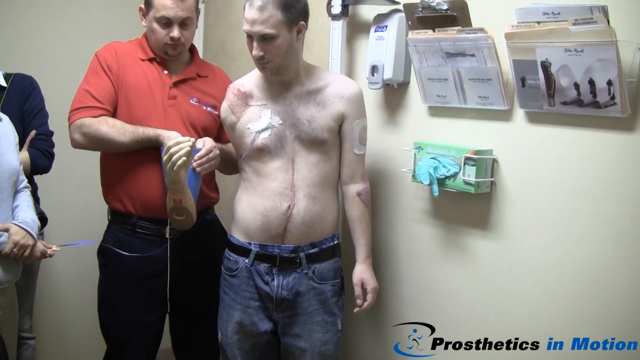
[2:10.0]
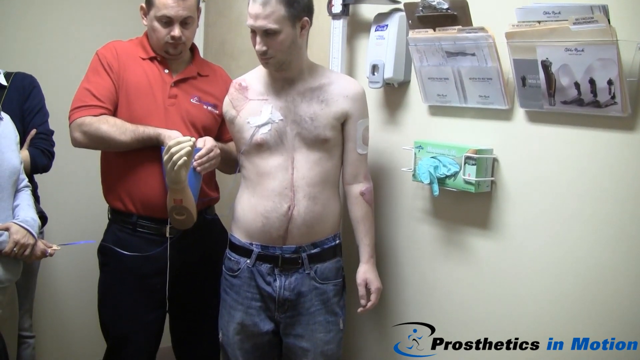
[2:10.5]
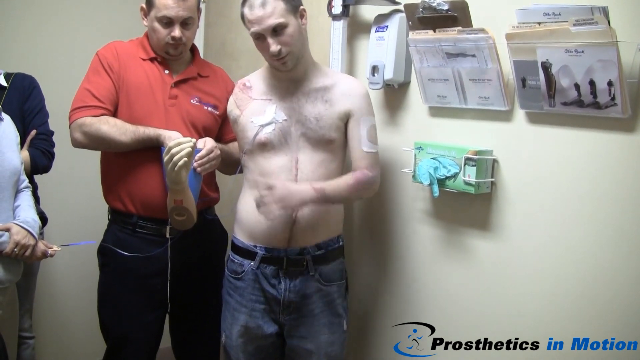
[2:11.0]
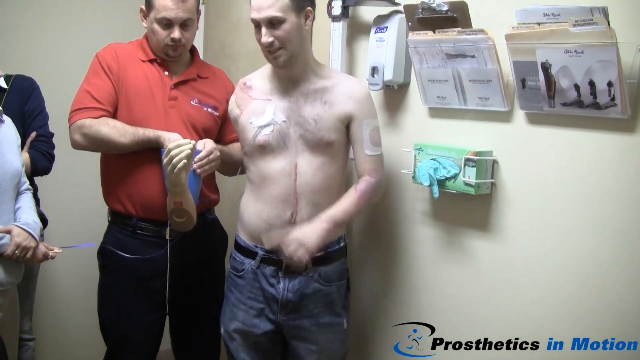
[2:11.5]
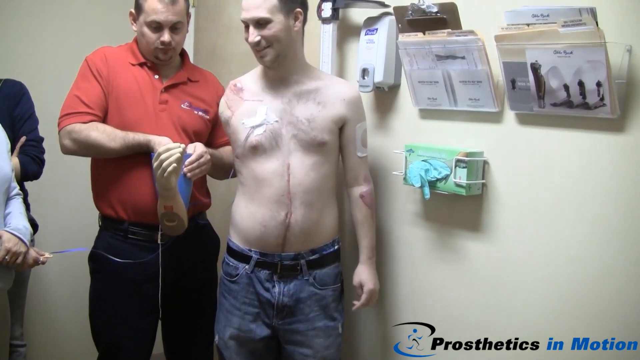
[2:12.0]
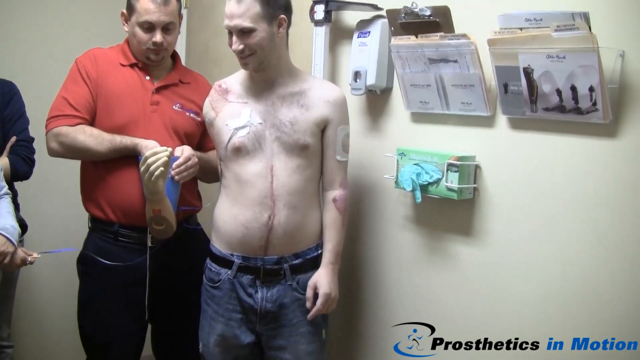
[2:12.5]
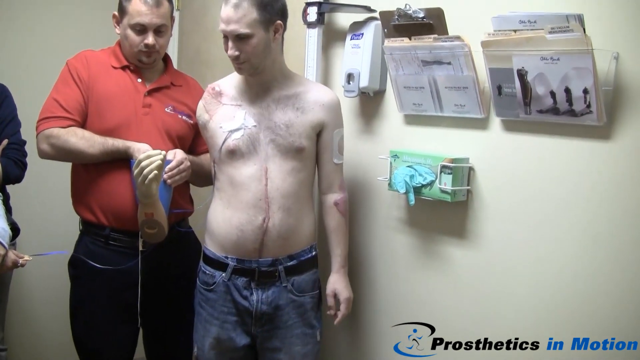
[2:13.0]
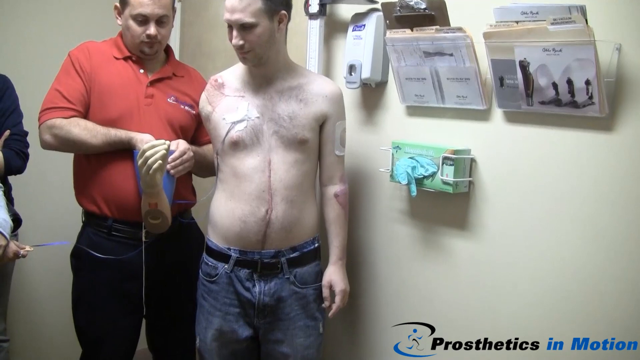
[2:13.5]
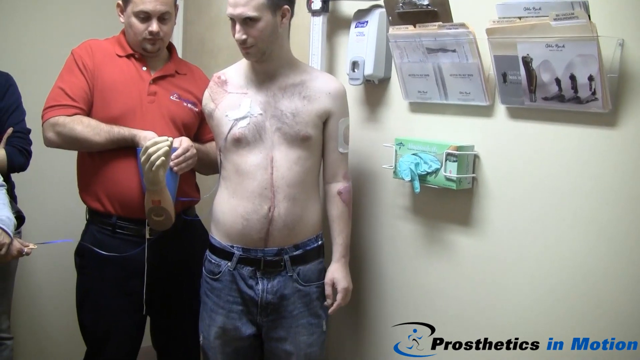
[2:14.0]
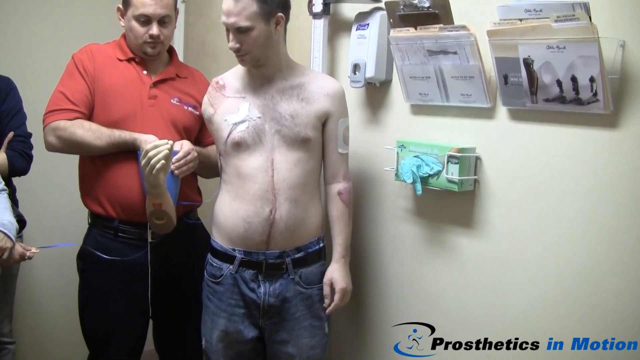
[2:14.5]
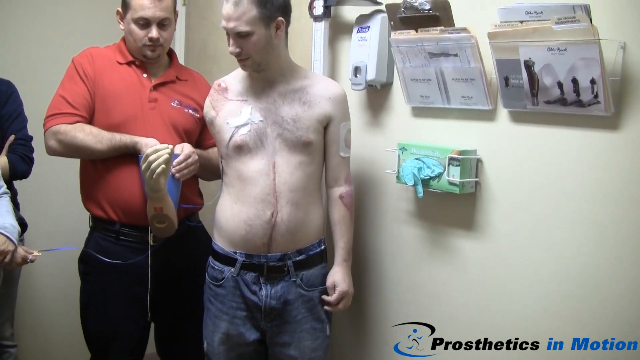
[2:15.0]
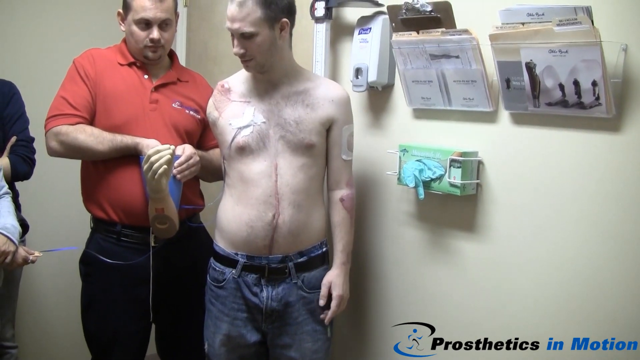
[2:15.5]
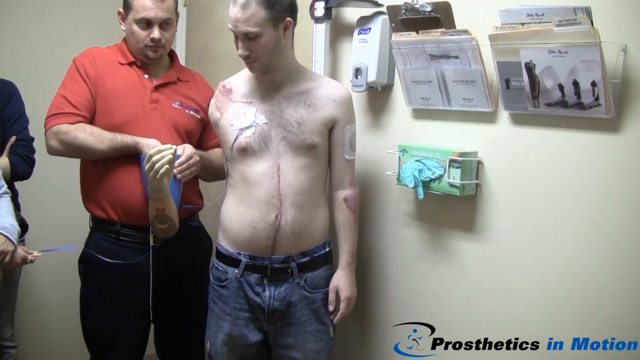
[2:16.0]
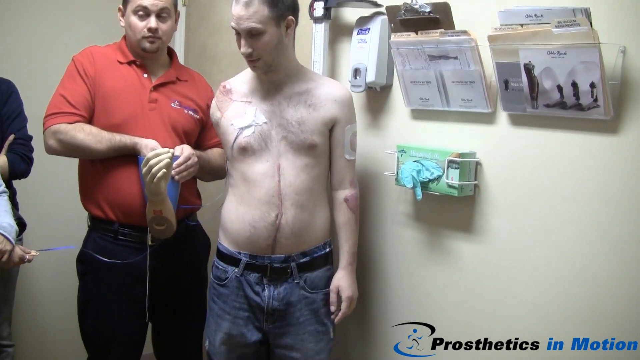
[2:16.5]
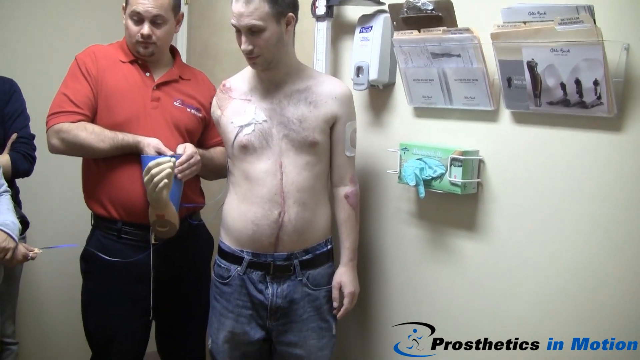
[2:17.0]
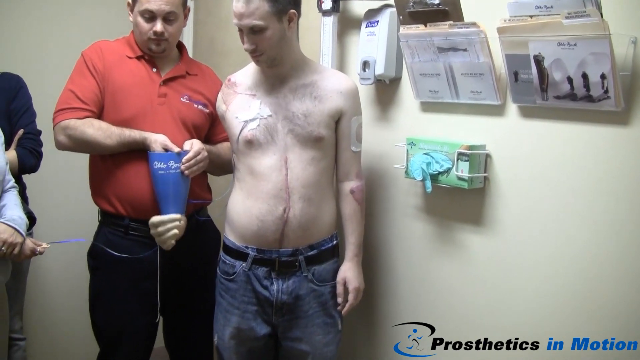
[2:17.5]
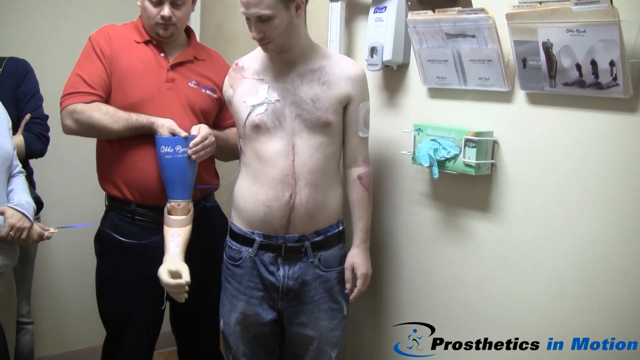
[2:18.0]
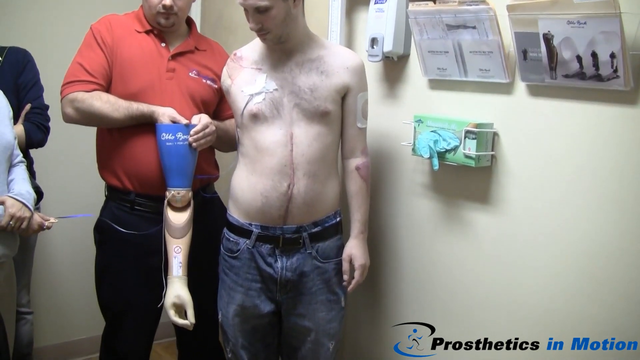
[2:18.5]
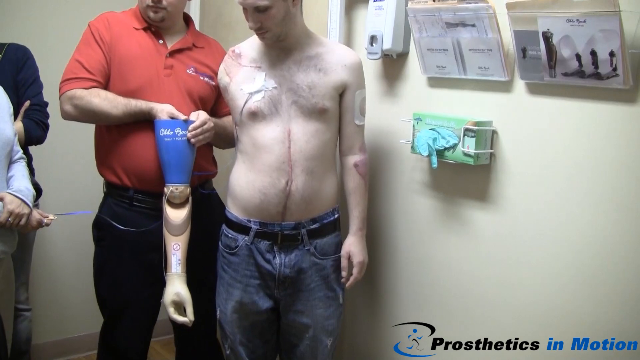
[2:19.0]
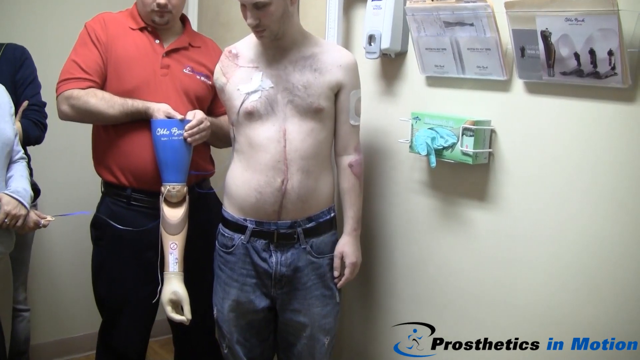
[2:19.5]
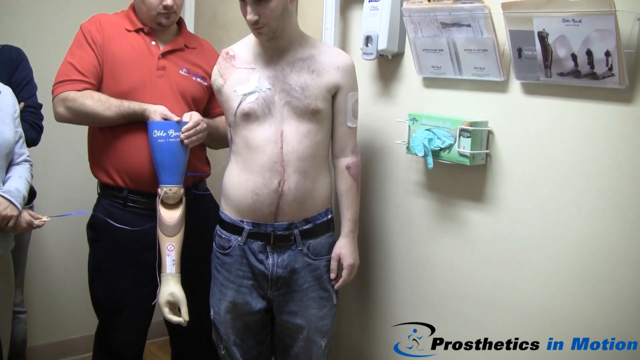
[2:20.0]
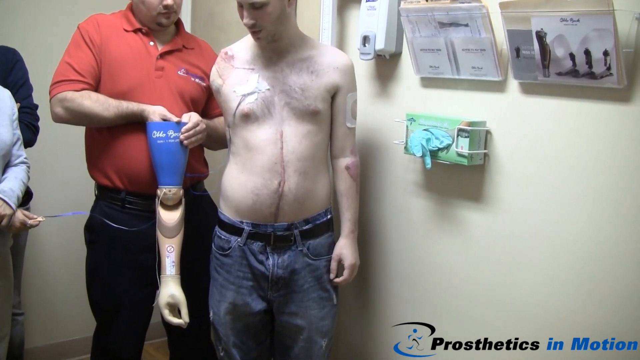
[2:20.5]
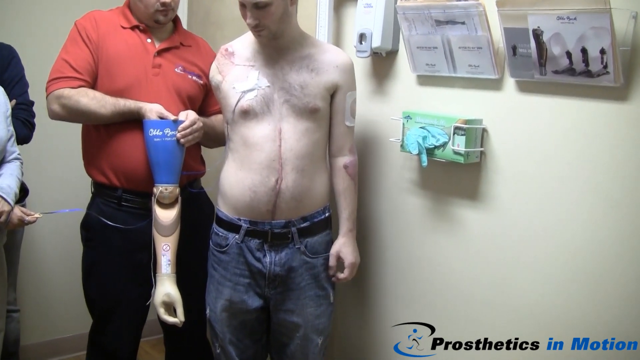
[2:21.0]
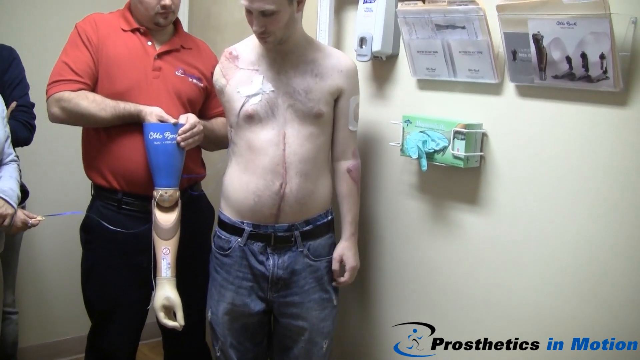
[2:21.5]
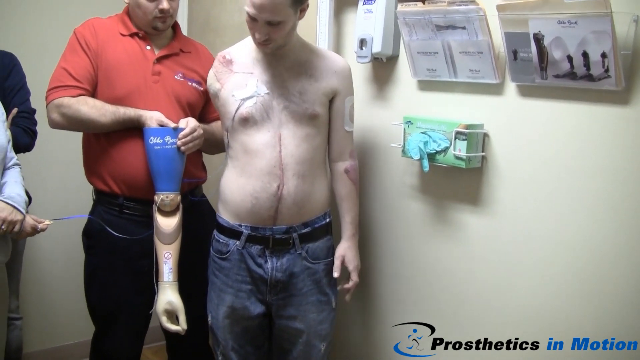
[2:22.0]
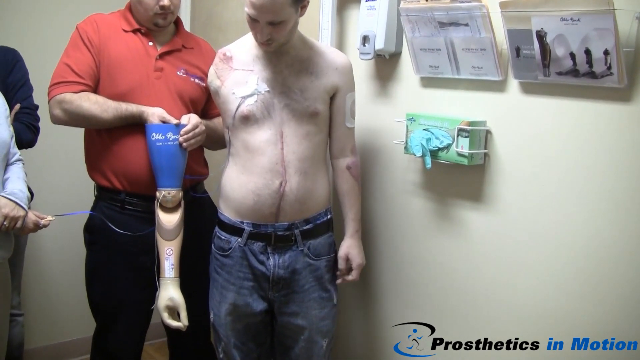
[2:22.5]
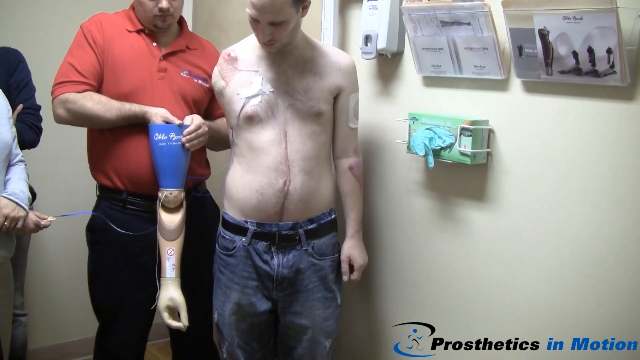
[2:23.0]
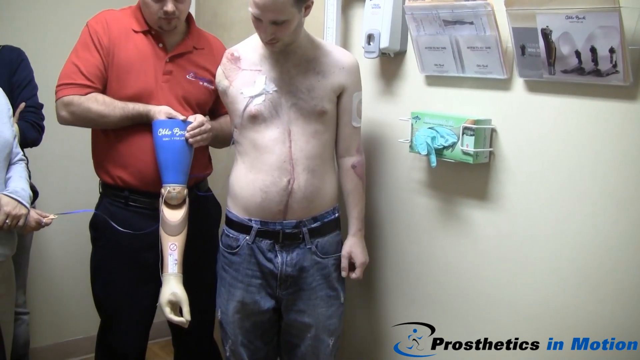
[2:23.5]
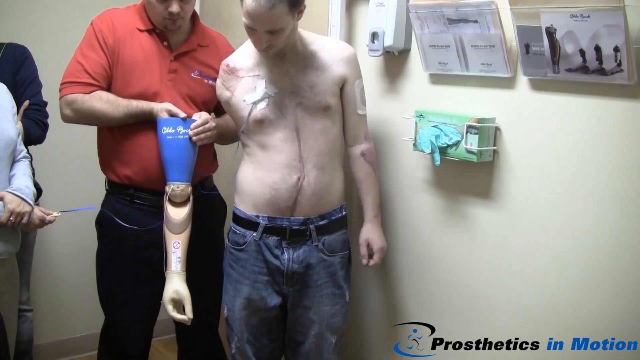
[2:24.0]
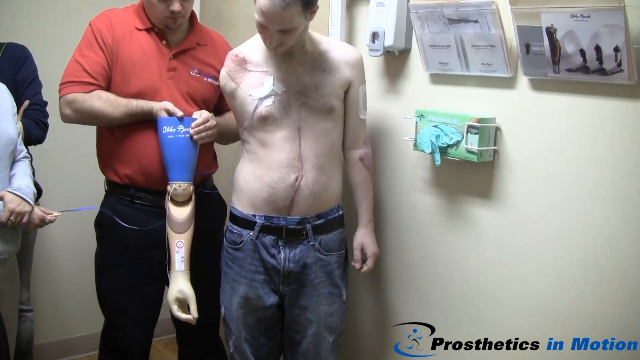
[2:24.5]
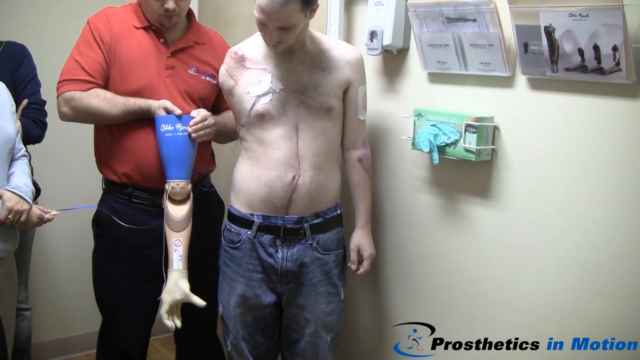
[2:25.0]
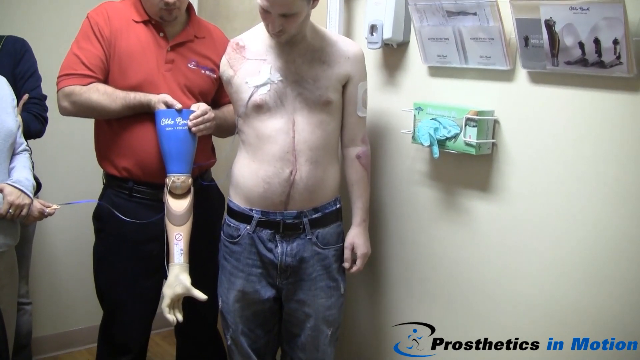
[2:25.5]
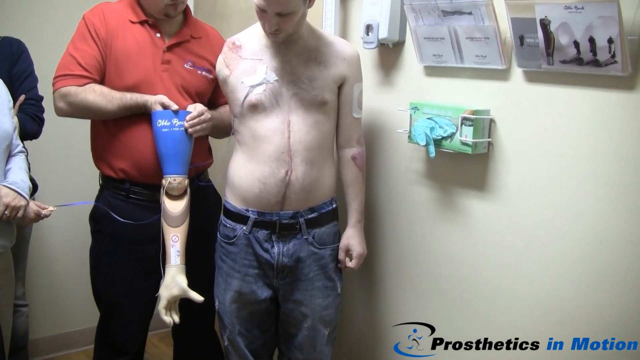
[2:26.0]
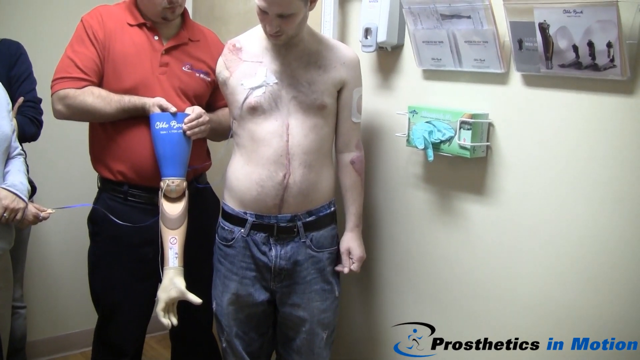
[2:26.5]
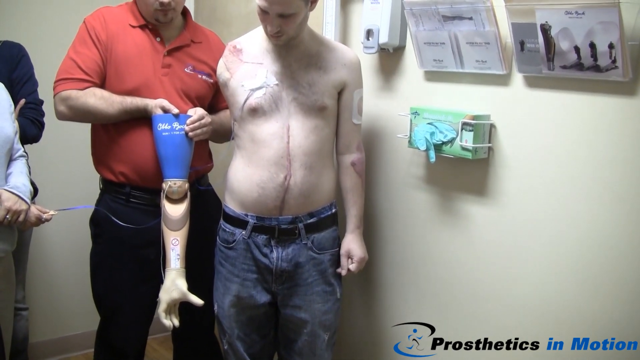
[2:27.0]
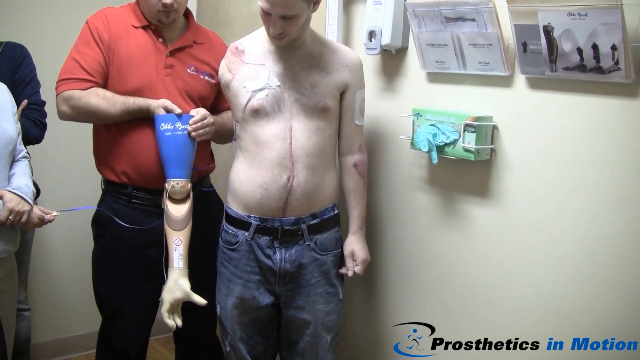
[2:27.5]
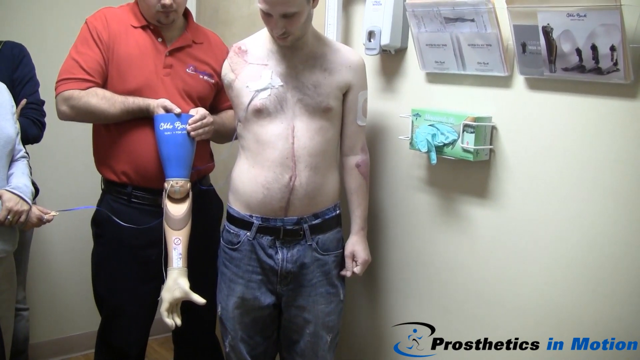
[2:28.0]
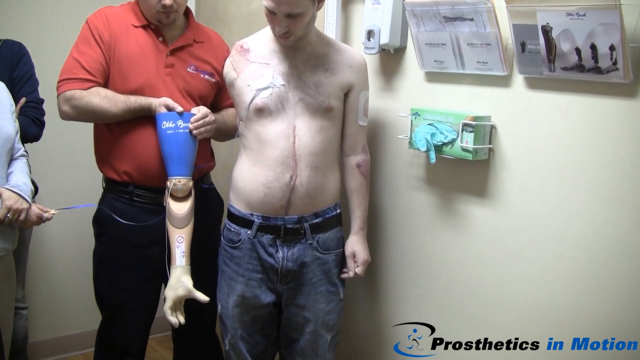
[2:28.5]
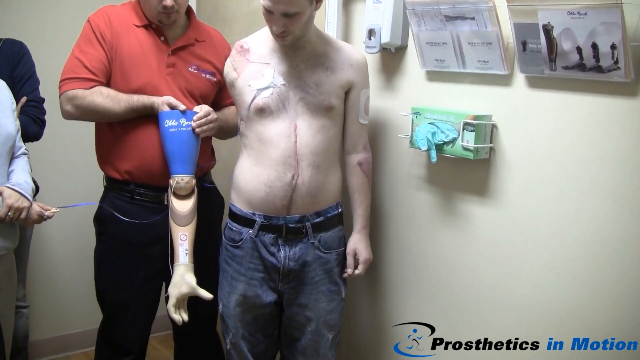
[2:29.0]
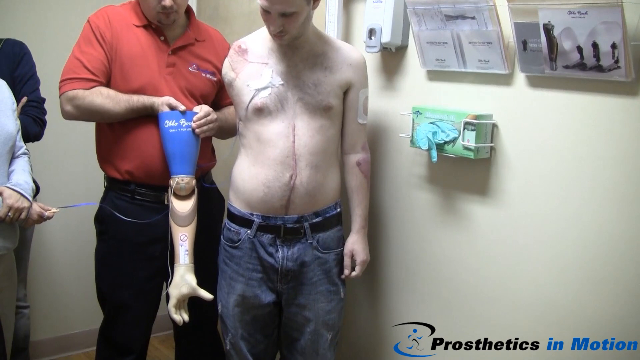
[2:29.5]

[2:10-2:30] The patient with the amputation at his right shoulder looks at the prosthetic arm held by the member of staff in the red t-shirt. He talks to the people in the room, who include the woman with long black hair and a woman in a blue jumper with glasses. The doctor in the silver jacket cannot be seen at this point. The patient motions with his left arm, pointing his finger to the hand on the prosthetic arm, and smiles. The member of staff in the red t-shirt presses some buttons inside the top of the arm and the arm lowers until it is straight. The finger and thumb of the prosthetic hand are together in a pinching position, then the hand opens and the thumb comes out to the side.